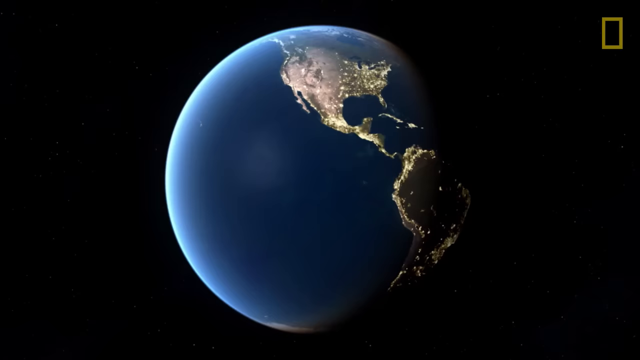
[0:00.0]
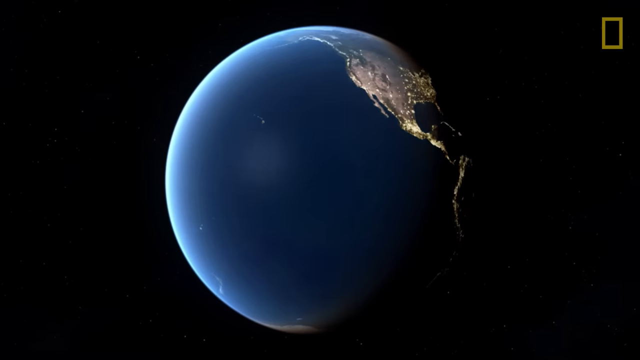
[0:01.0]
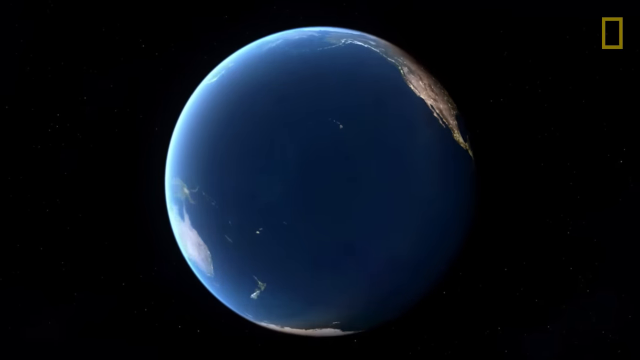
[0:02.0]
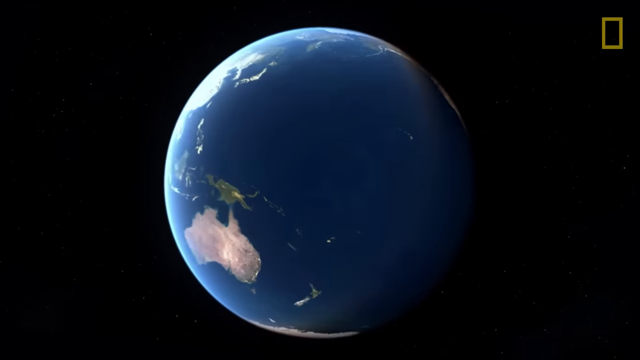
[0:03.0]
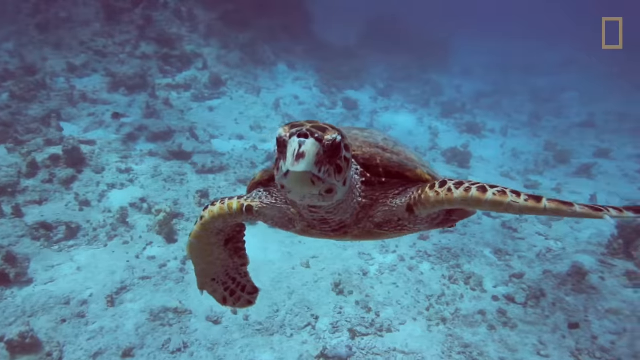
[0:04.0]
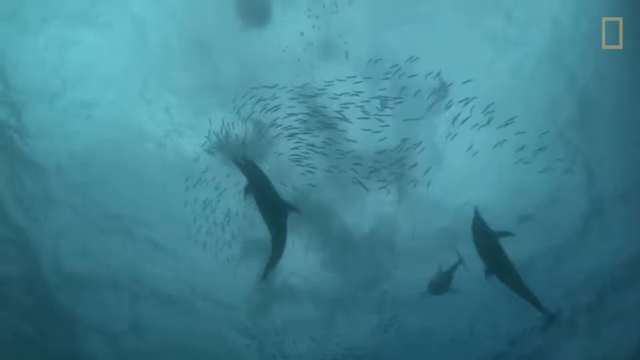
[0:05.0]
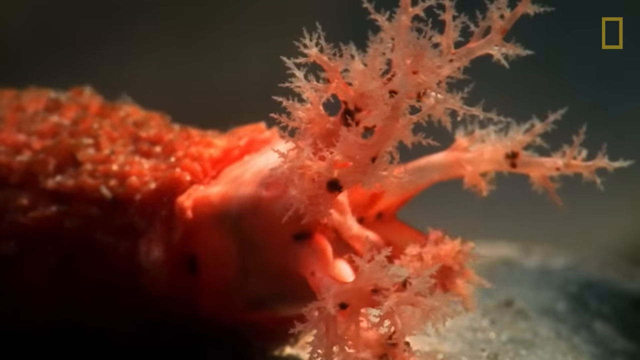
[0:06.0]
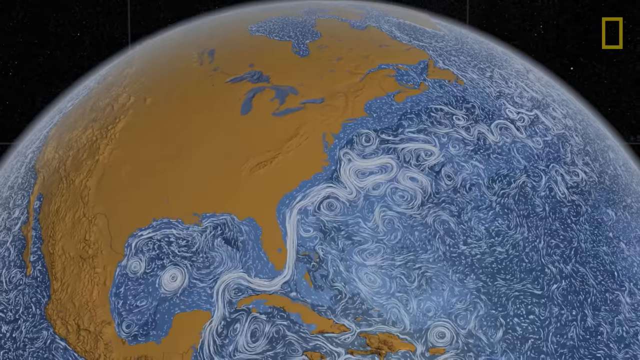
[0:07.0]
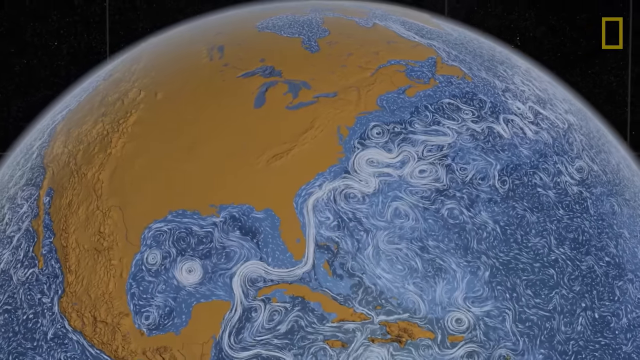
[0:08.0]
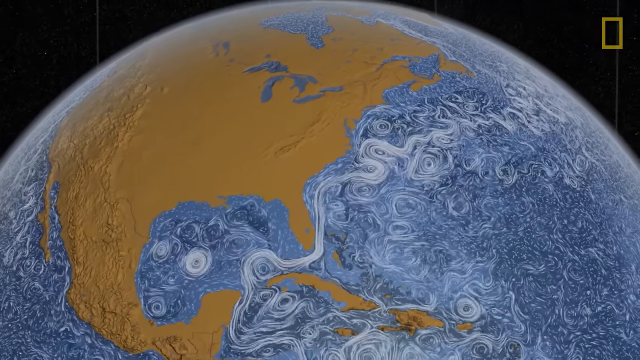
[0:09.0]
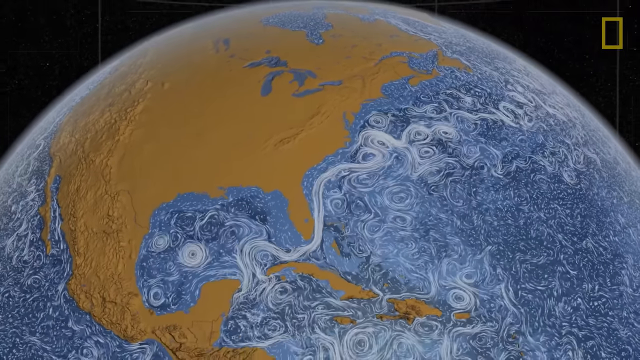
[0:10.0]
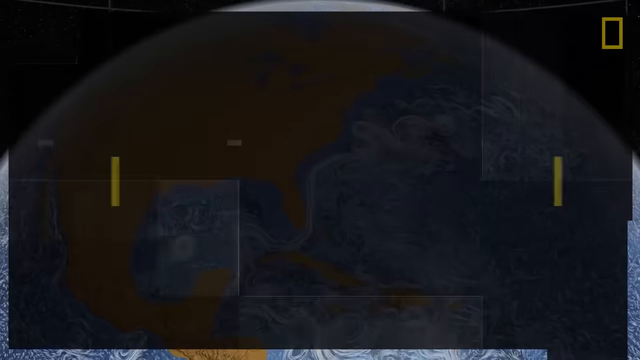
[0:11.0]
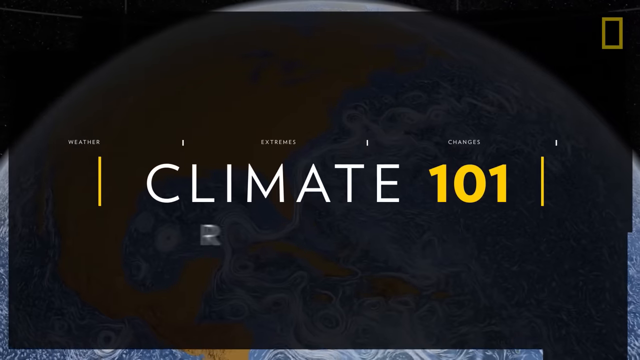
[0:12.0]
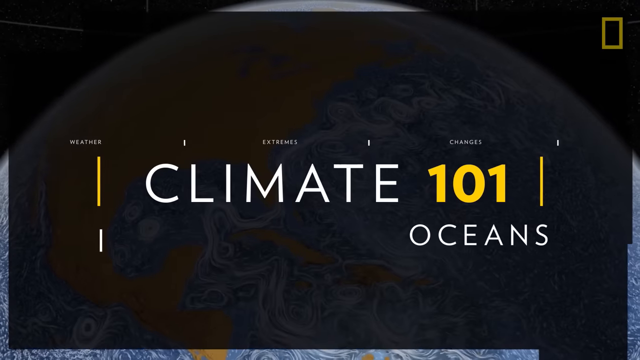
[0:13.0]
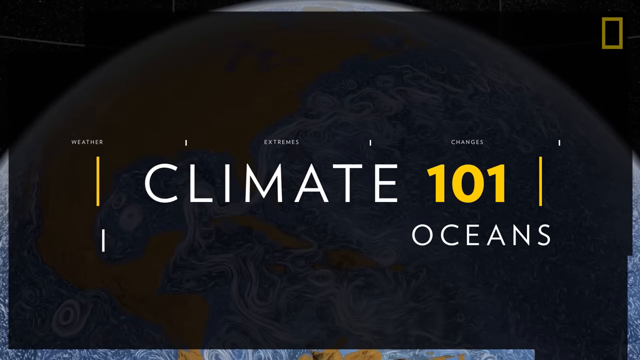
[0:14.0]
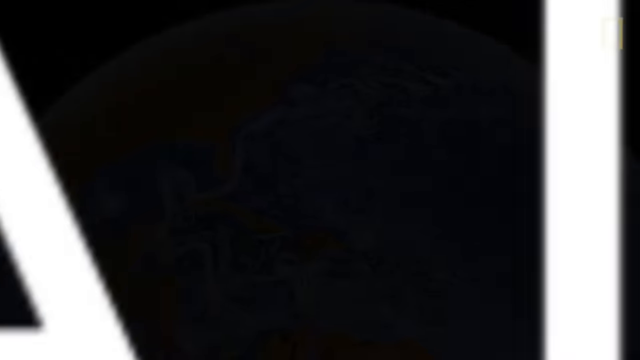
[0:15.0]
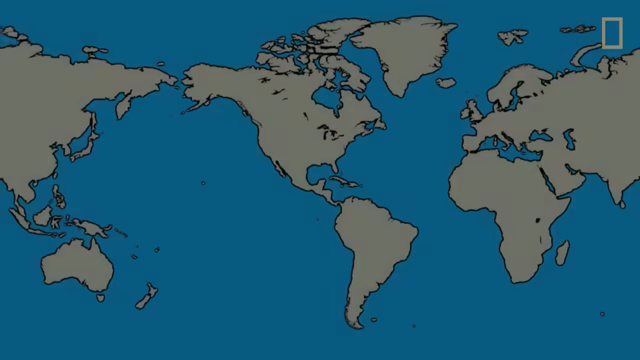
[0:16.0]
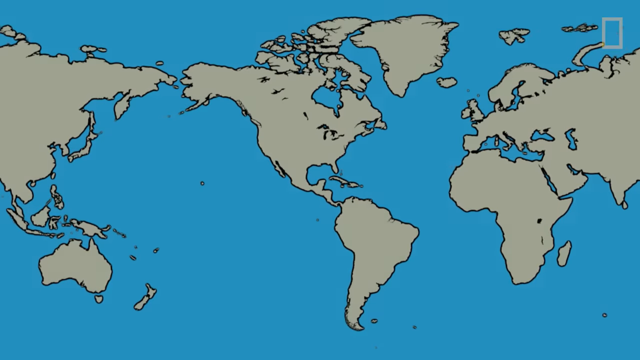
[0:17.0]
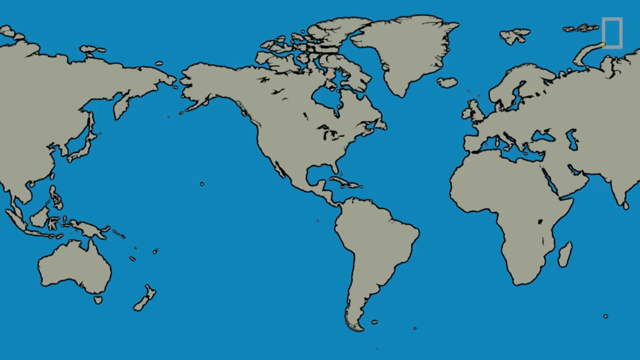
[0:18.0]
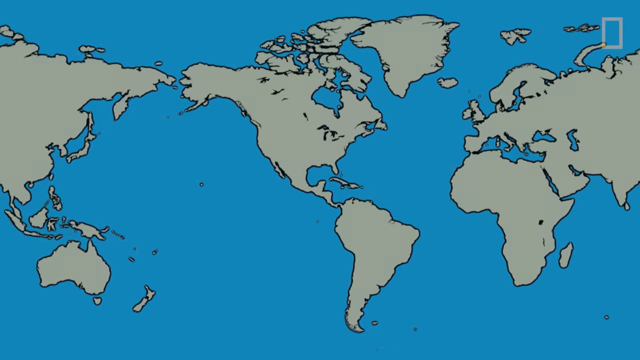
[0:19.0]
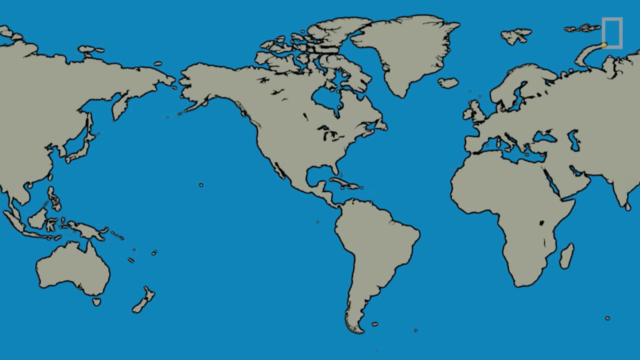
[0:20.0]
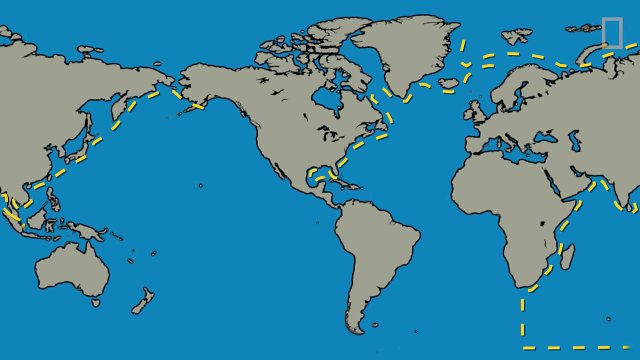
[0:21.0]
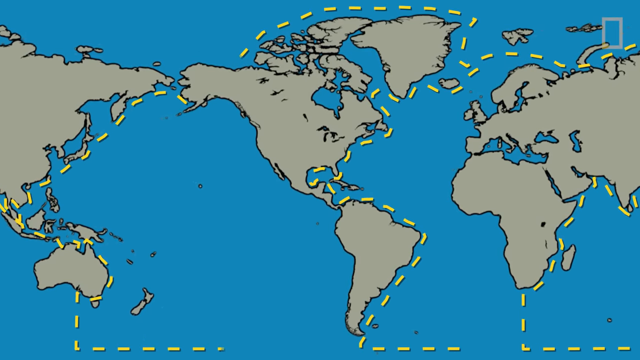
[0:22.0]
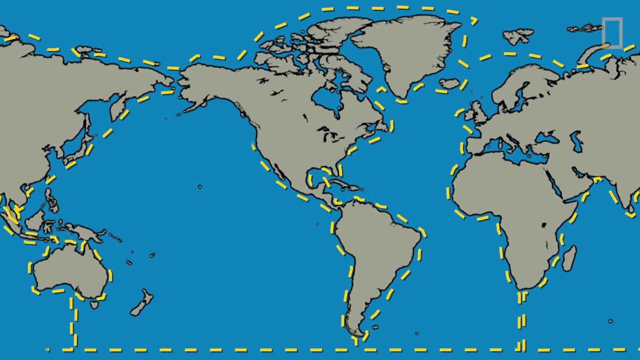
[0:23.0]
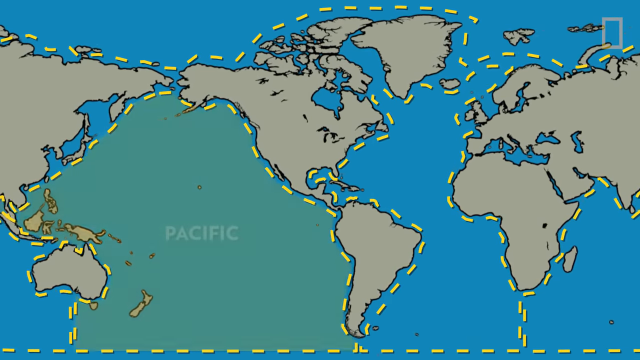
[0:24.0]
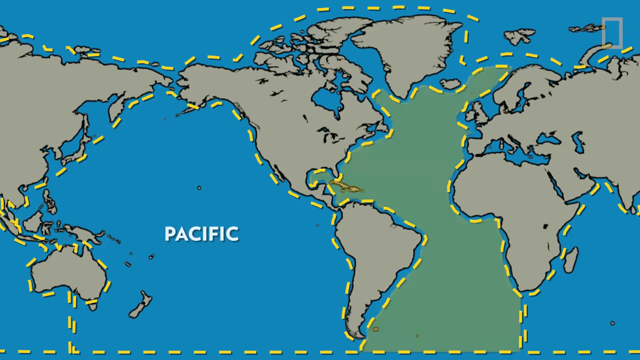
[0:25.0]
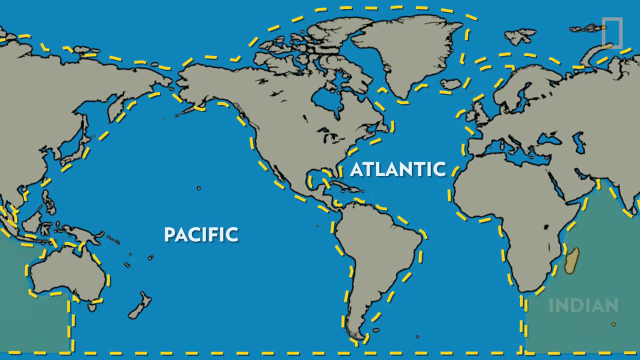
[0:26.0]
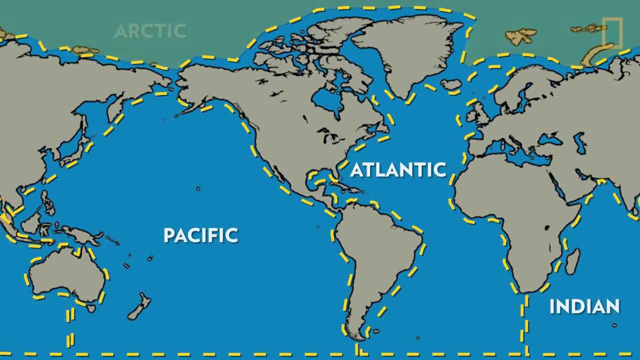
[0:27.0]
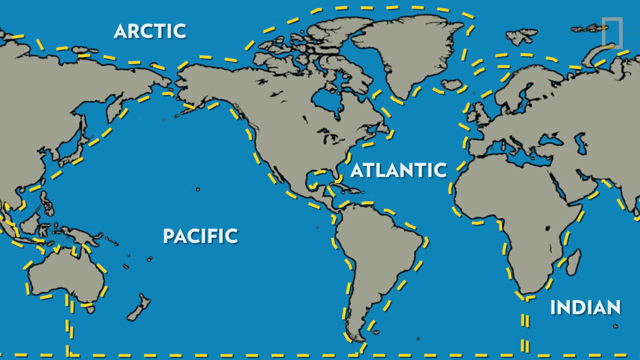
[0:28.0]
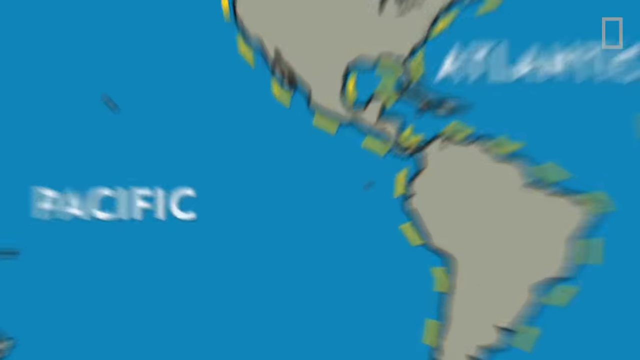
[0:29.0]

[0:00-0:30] In a frame wider than it is tall, the video opens on the Earth, which seems to be computer generated, rotating counterclockwise. One of the oceans is visible first, then Australia comes into view, followed by Asia. Something like an aura radiates around the left-hand side of the globe, while the lower right-hand side seems to be quite dark. The view then changes completely to a turtle swimming underwater directly toward the camera, with water around it and the sea floor in the background, covered in light-colored sand, with rocks on the left. Next, still in the water, the silhouettes of two dolphins swim above in the distance. The view then switches to a different, closer view of the Earth in which only the top half is visible, cut off on the left and right; it rotates counterclockwise as North America comes into the main viewing area.